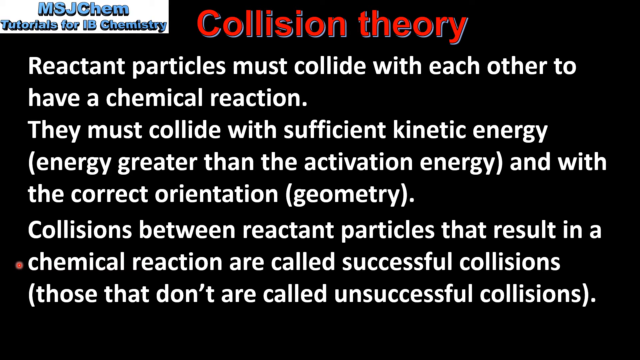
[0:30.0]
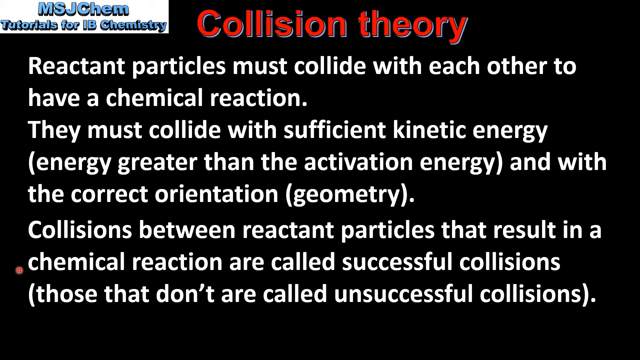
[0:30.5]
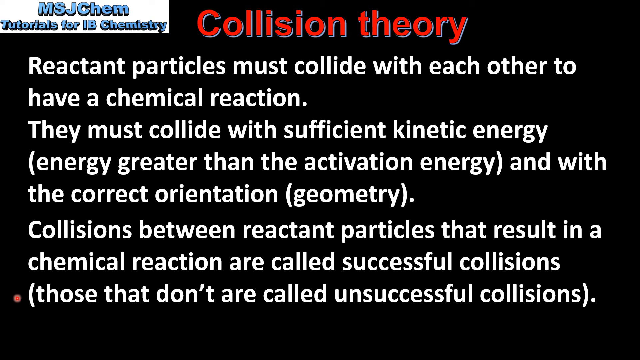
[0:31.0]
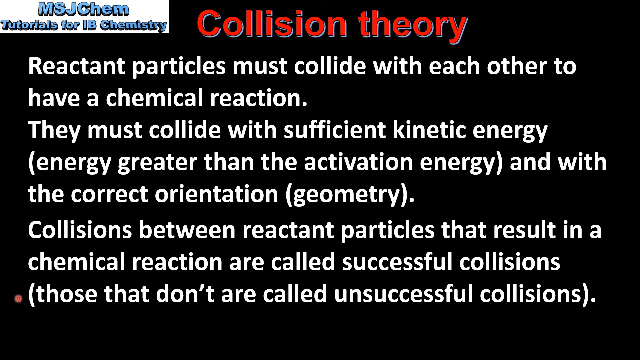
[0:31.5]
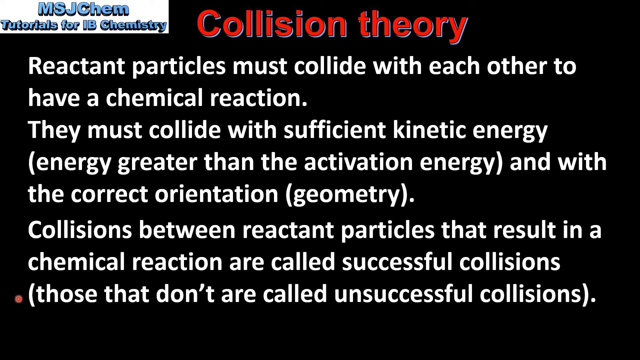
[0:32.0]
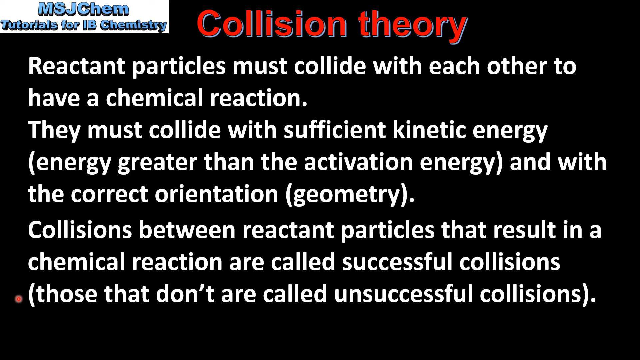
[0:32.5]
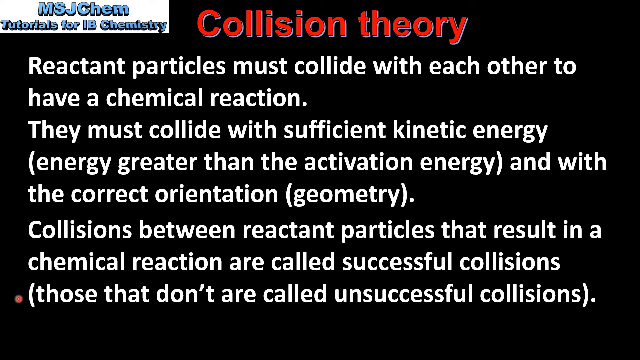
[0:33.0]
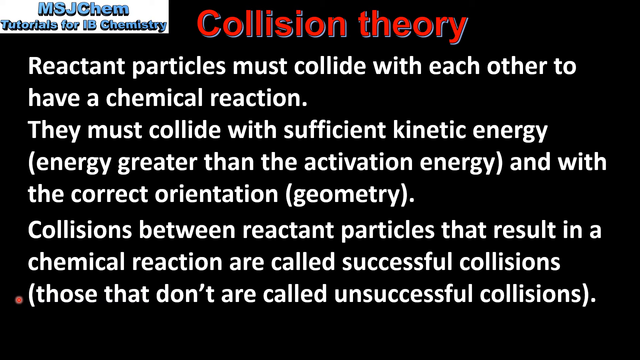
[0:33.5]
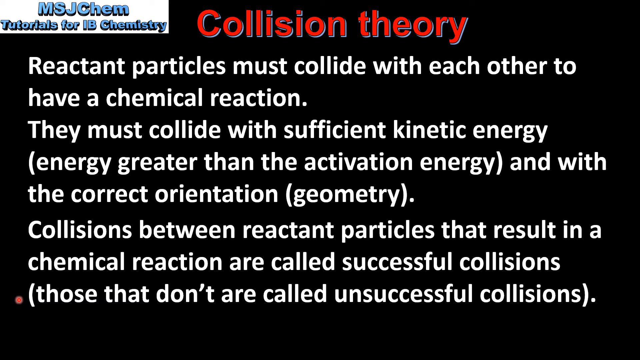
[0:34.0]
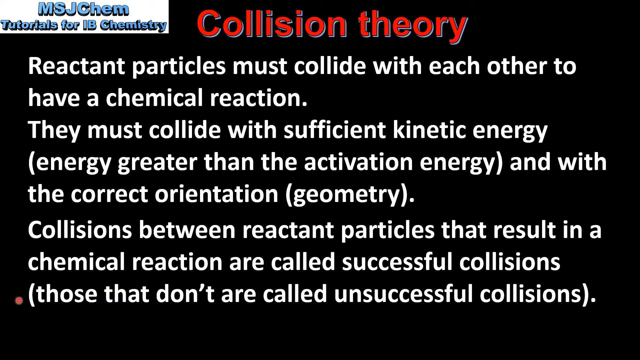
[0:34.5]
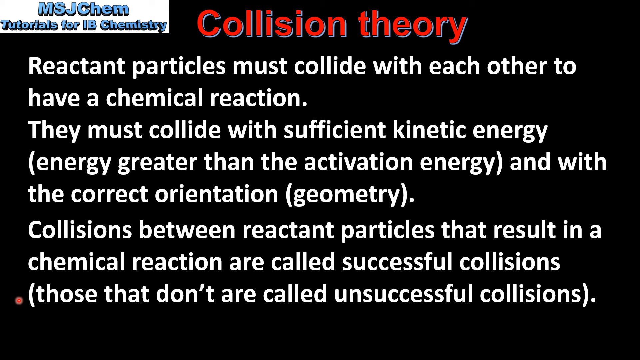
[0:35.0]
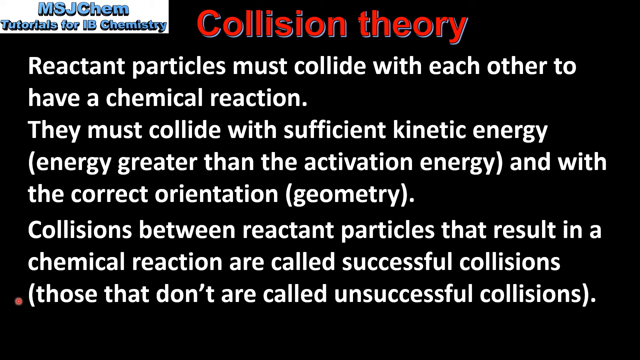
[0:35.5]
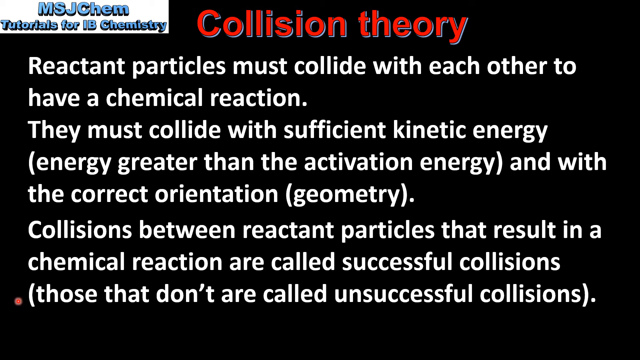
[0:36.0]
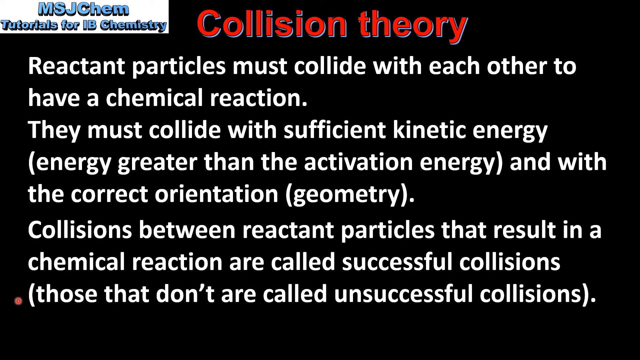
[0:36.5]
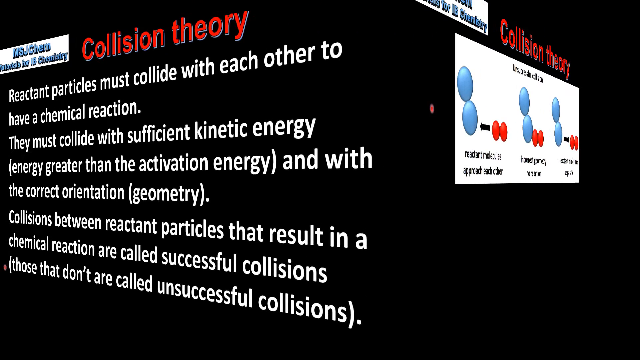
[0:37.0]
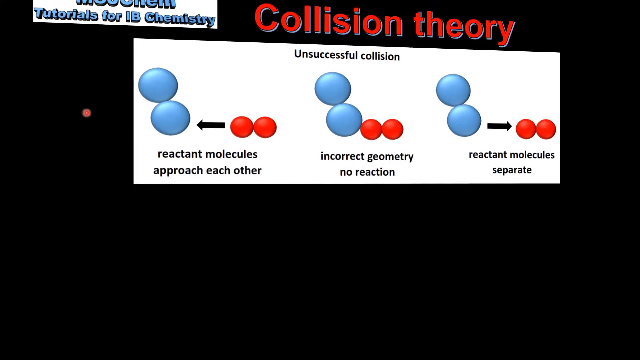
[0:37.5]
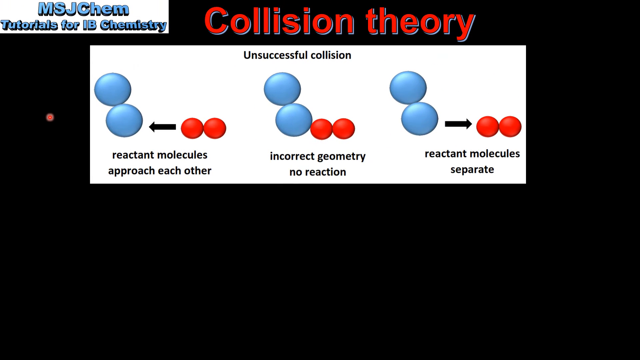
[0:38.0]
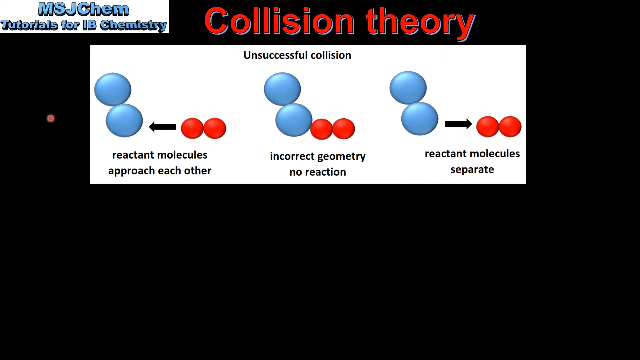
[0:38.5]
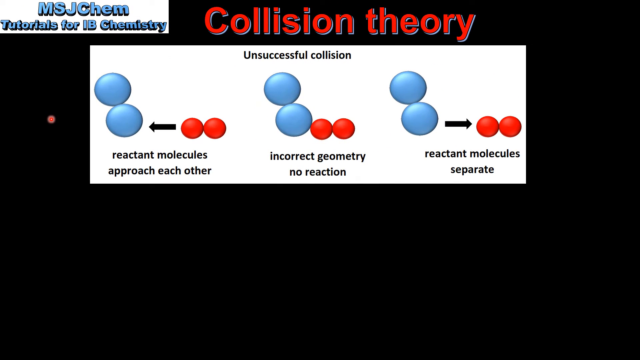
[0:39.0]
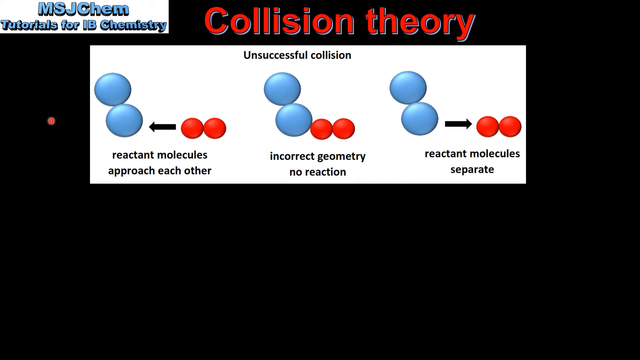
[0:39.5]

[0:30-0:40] Text continues on screen stating that reactant particles must collide with each other to have a chemical reaction, with energy "greater than activation energy" and with the correct orientation. The words are written in white and the view is black. A dot graphic then appears, with a blue bubble and a red bubble, illustrating an unsuccessful collision.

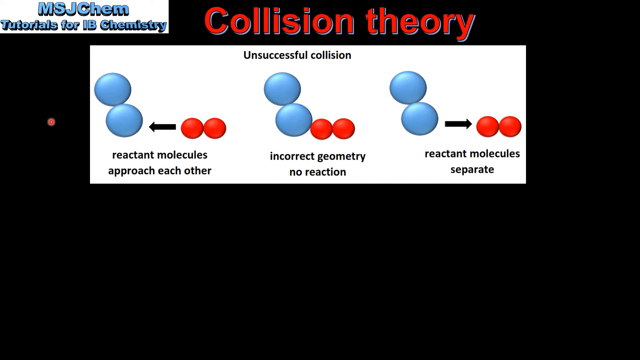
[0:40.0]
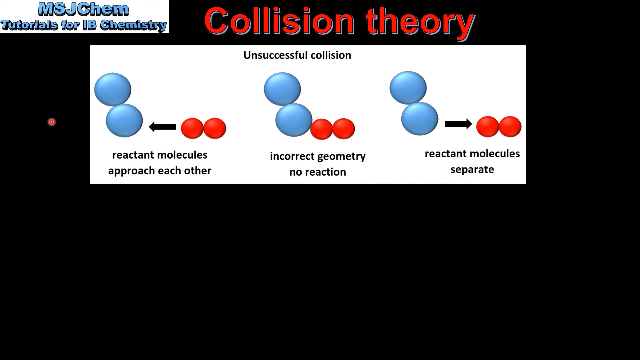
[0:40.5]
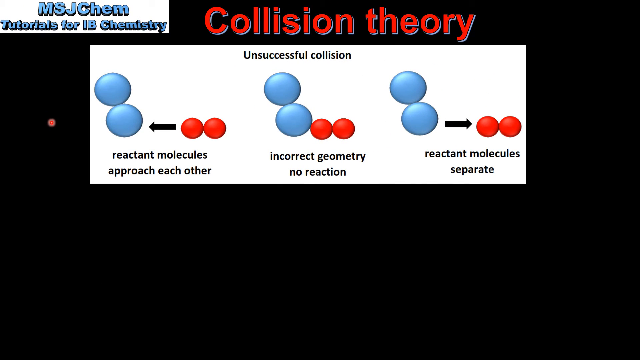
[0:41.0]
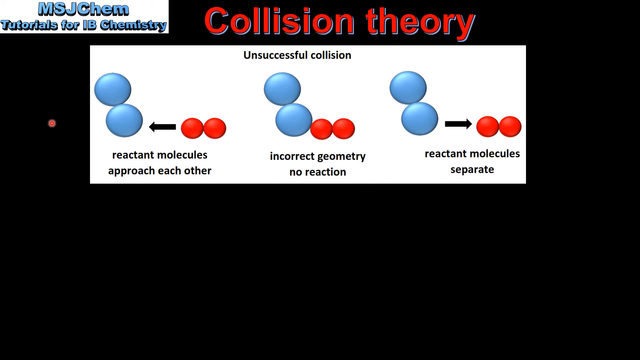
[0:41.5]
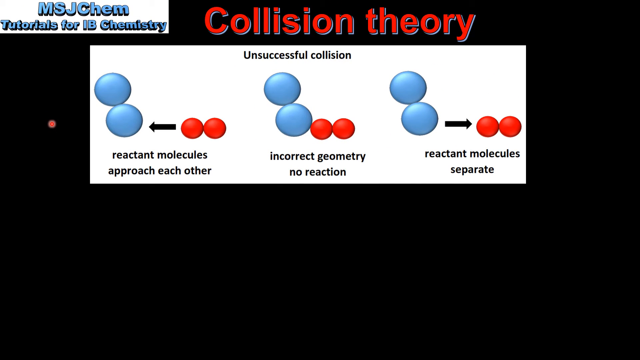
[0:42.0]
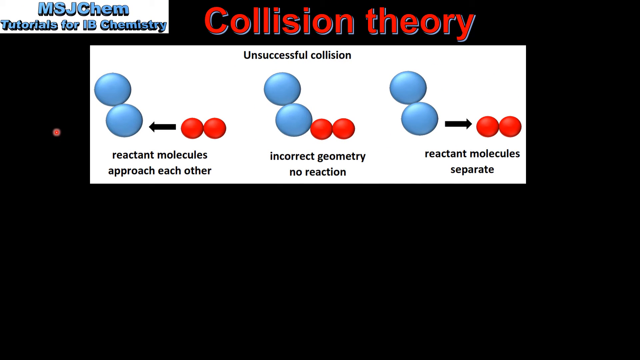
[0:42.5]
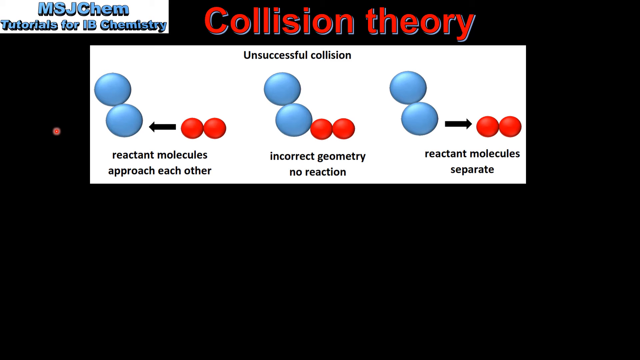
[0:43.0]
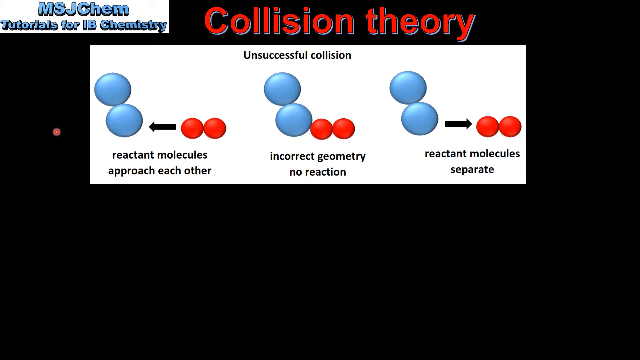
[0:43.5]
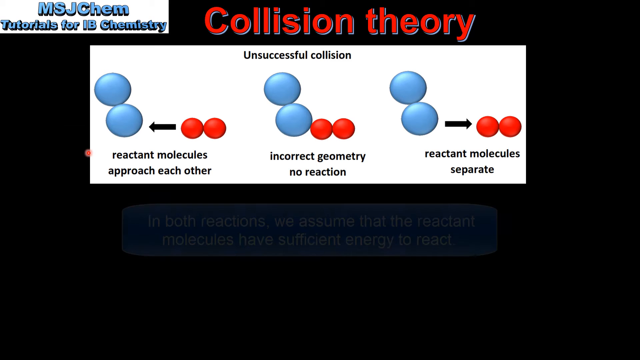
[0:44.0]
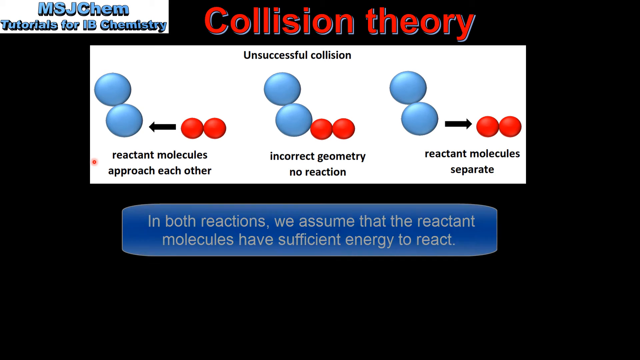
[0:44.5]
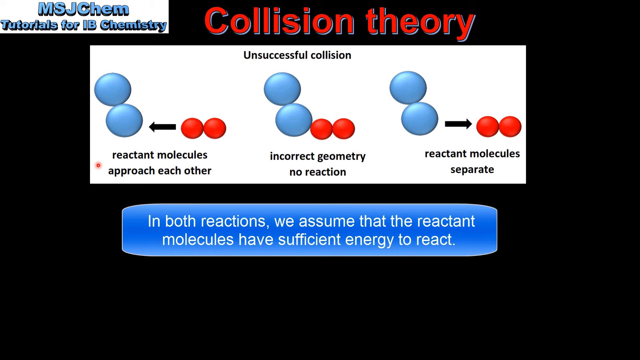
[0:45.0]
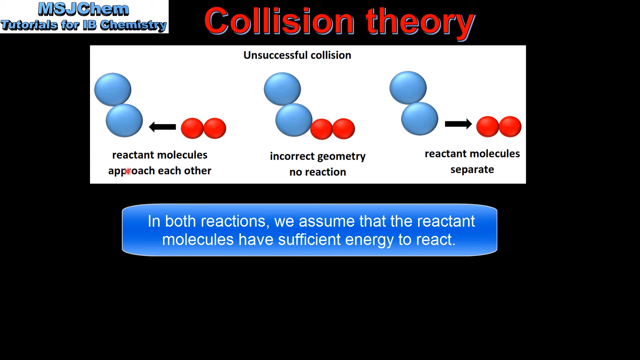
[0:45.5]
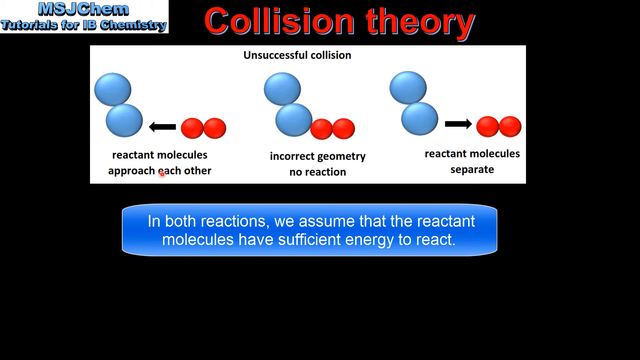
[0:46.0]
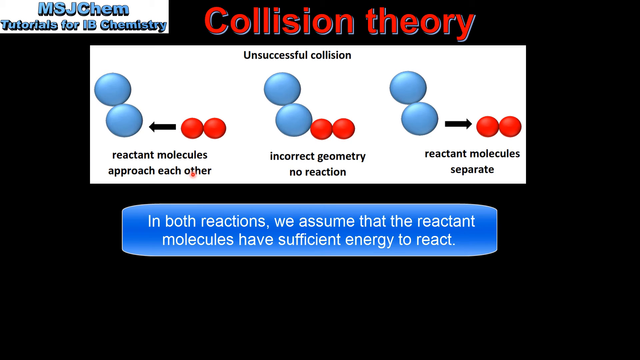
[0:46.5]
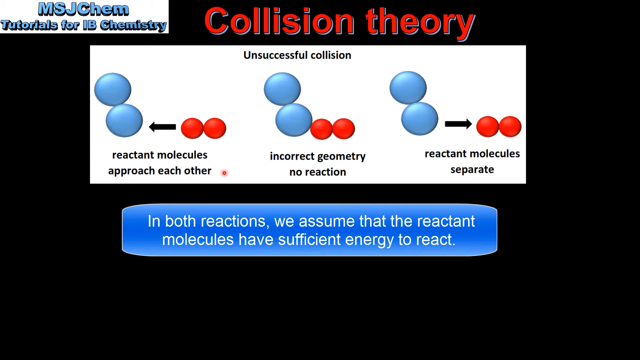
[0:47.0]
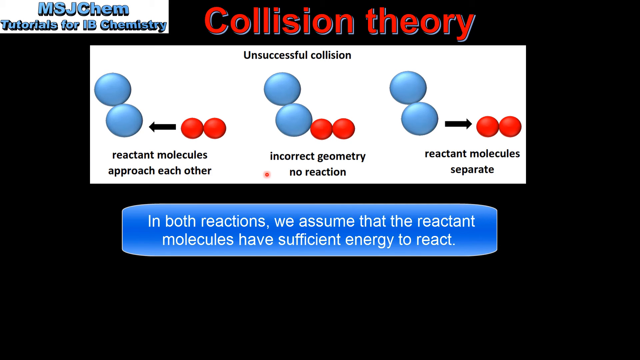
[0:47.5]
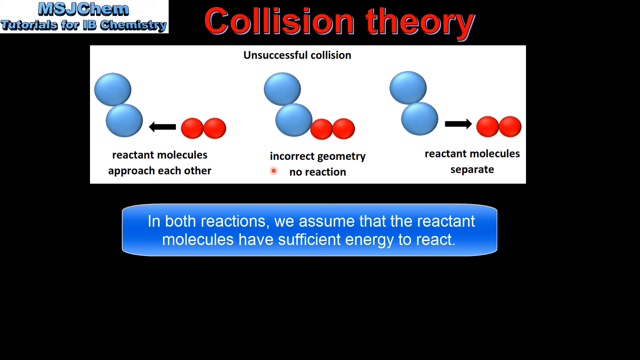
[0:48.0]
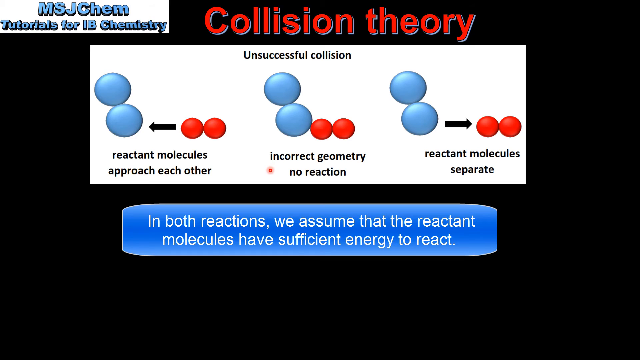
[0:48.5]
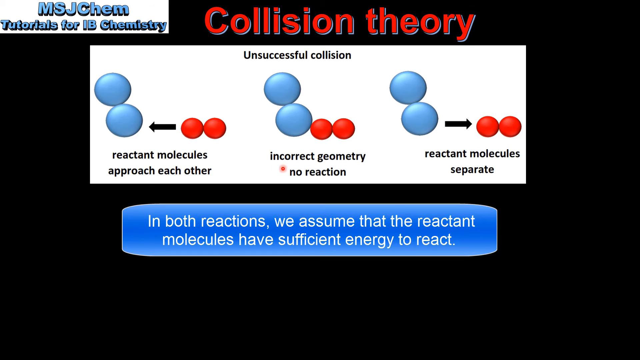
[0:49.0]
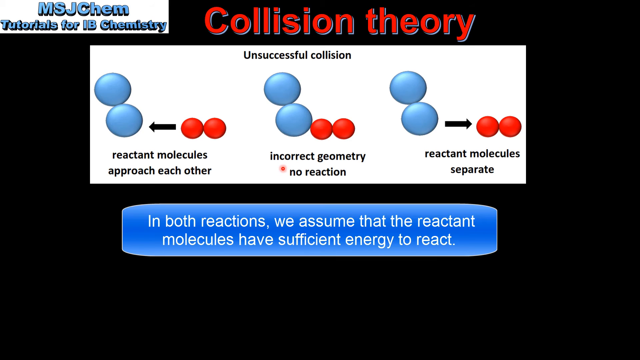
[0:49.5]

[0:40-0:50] Two bubbles are connected, and two red bubbles are connected. The graphic illustrates an unsuccessful collision, with examples. Different bubbles are shown, with an explanation of each bubble and of how the dots are connected.